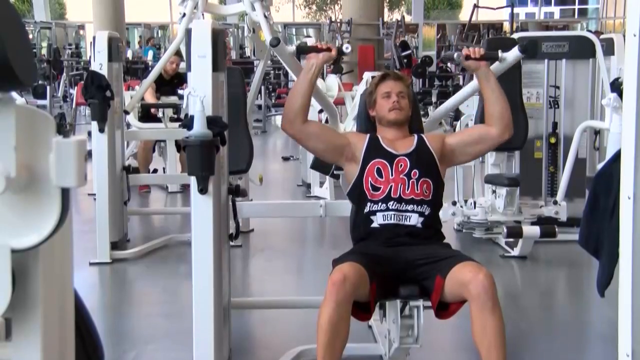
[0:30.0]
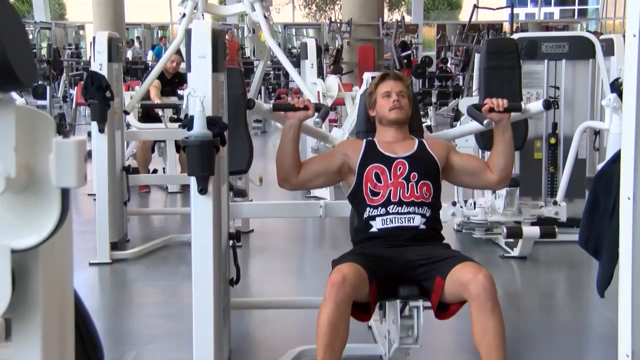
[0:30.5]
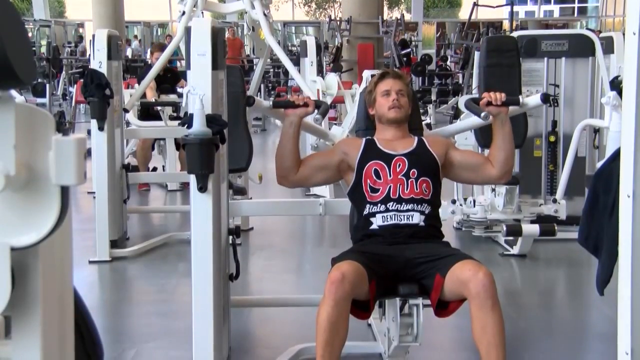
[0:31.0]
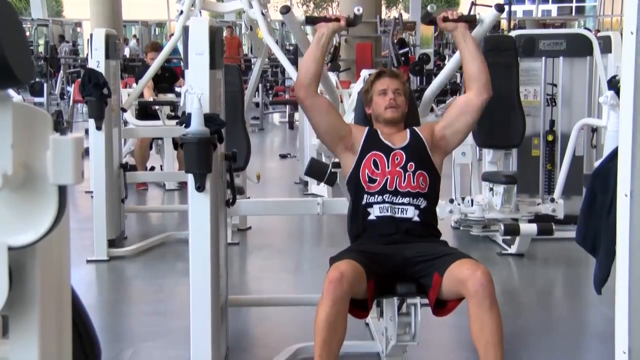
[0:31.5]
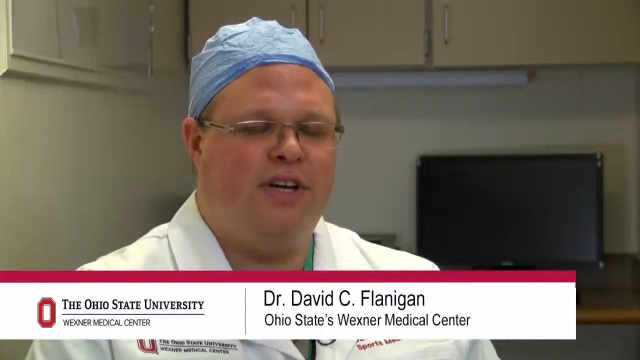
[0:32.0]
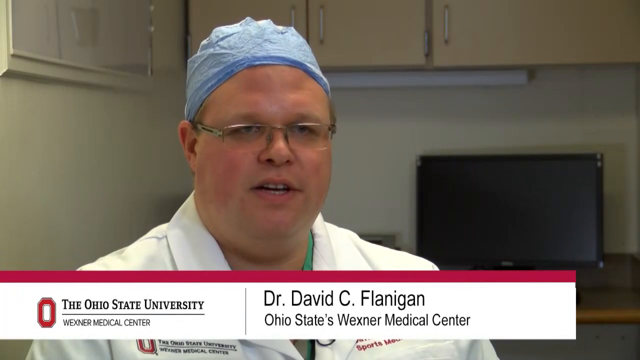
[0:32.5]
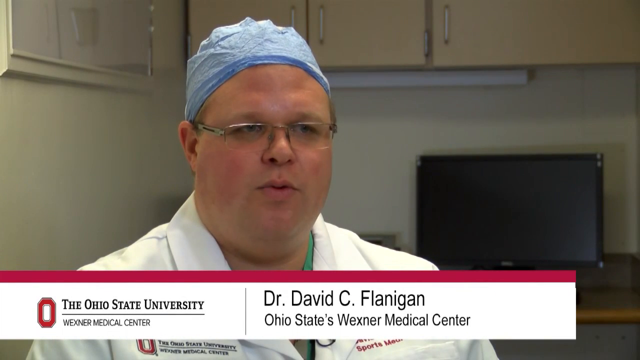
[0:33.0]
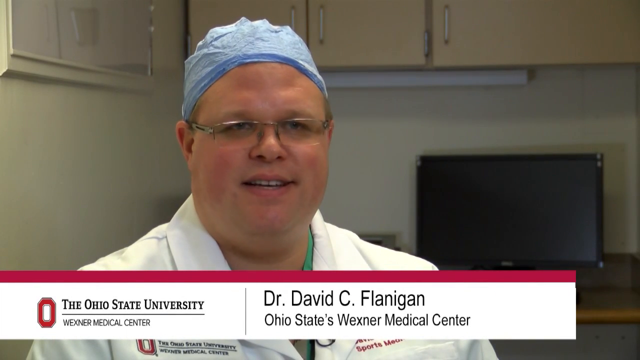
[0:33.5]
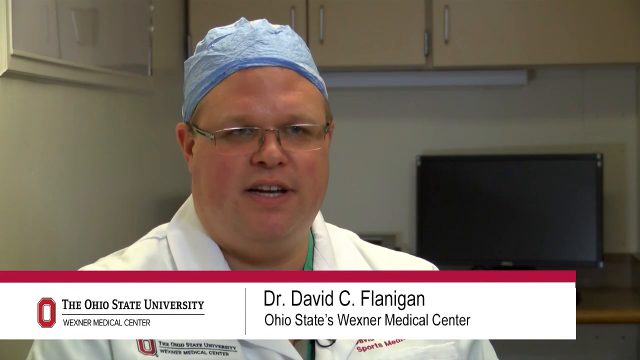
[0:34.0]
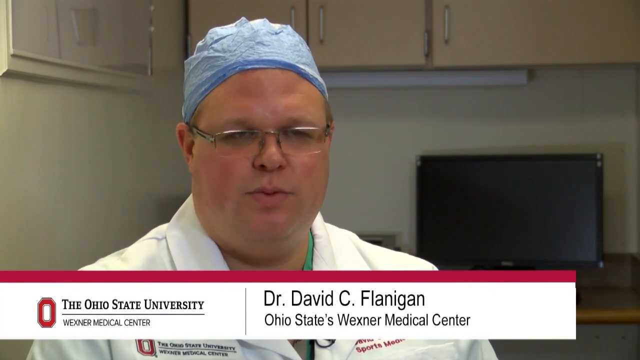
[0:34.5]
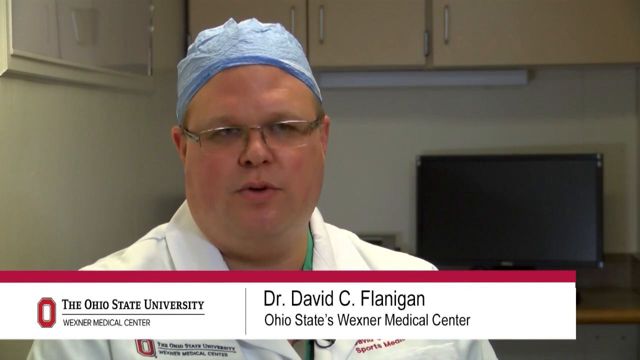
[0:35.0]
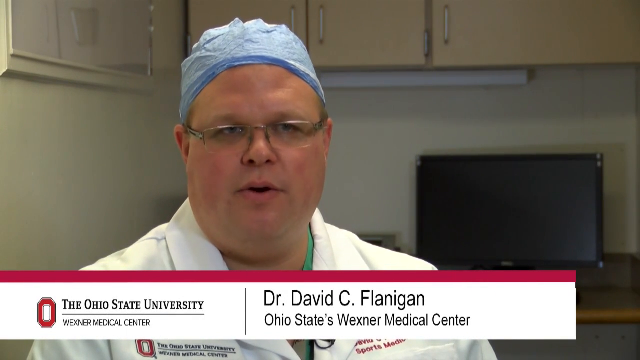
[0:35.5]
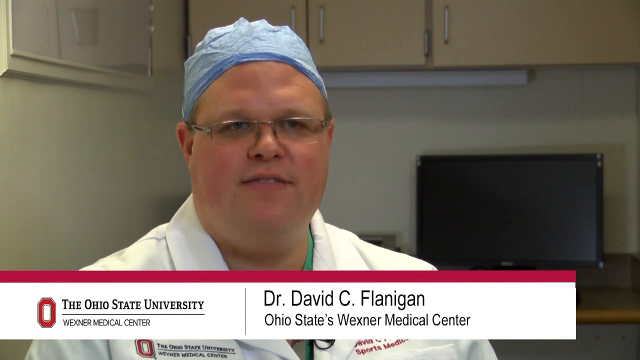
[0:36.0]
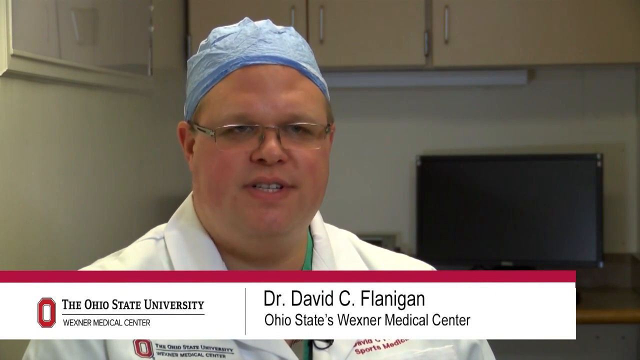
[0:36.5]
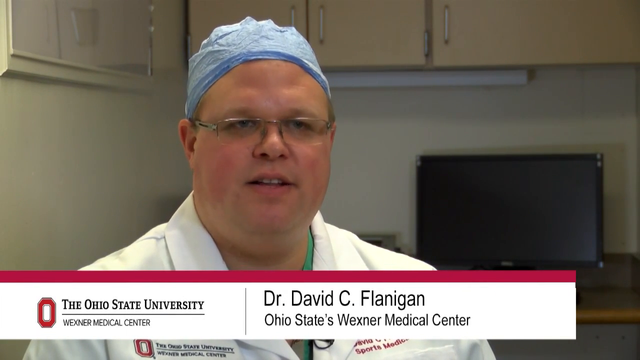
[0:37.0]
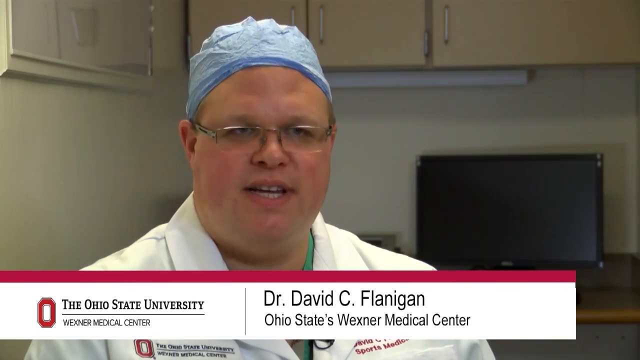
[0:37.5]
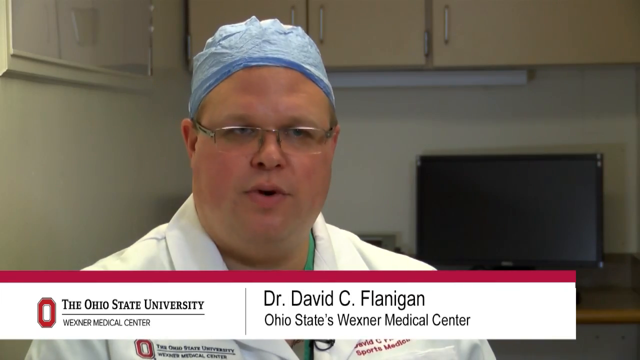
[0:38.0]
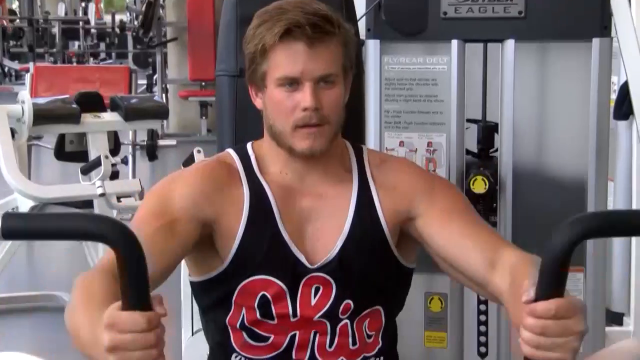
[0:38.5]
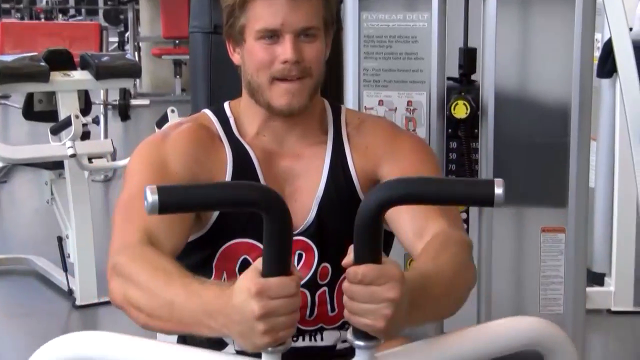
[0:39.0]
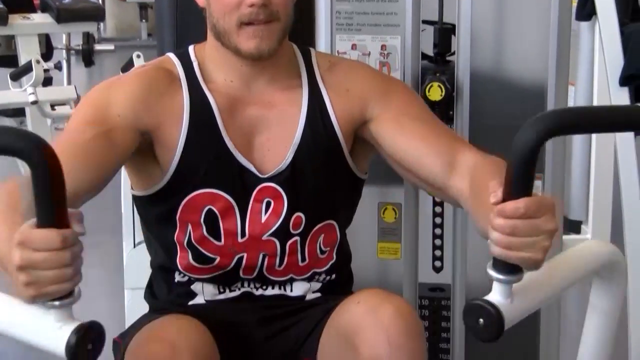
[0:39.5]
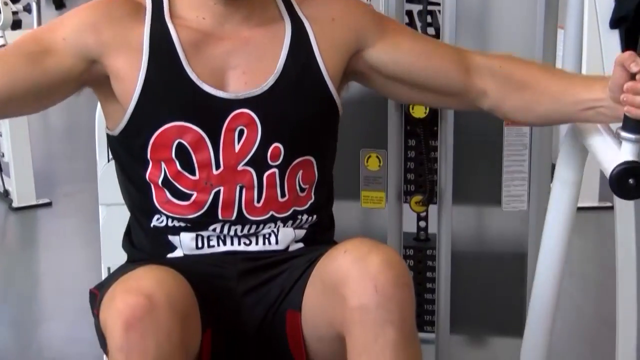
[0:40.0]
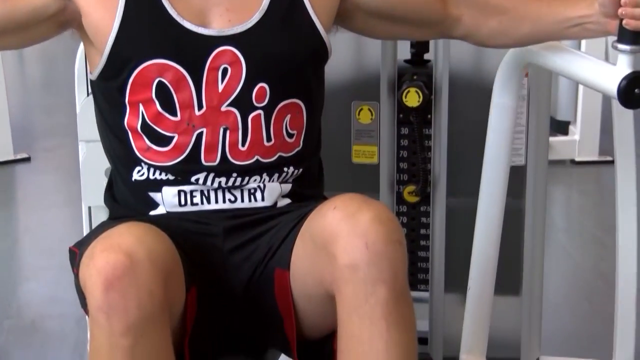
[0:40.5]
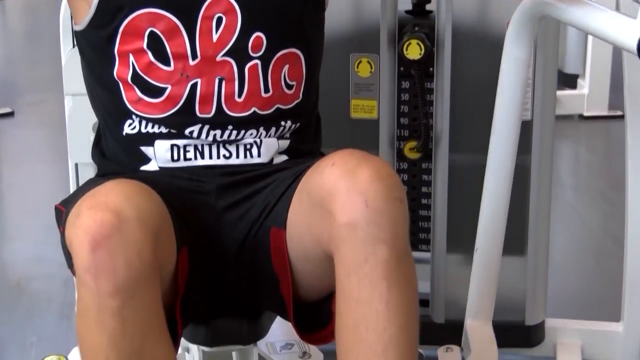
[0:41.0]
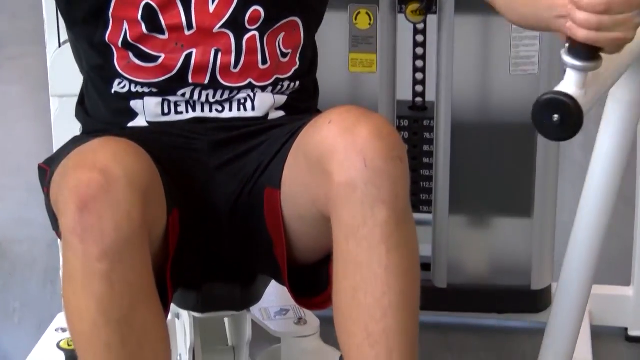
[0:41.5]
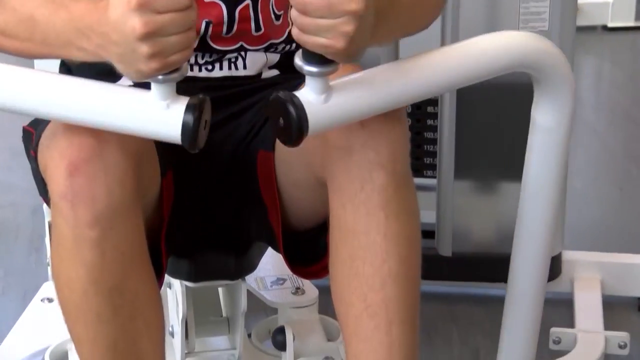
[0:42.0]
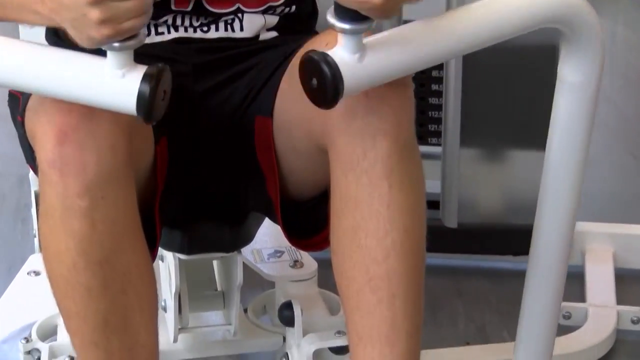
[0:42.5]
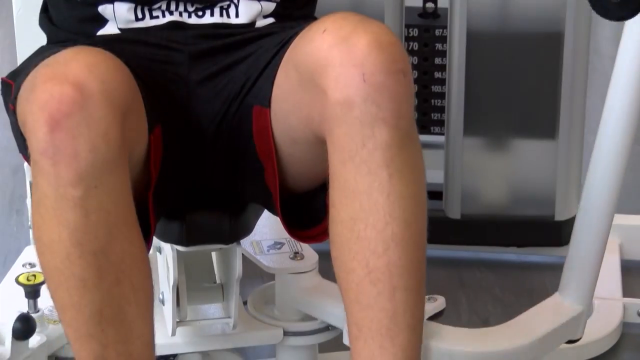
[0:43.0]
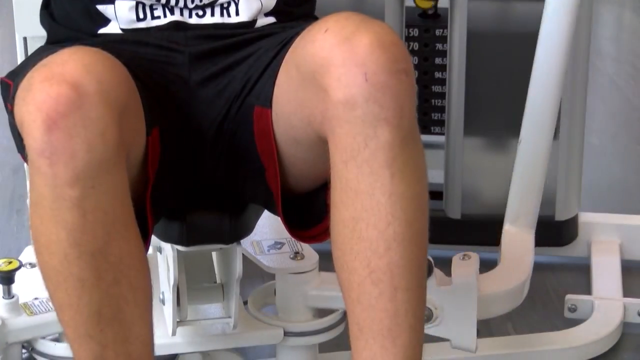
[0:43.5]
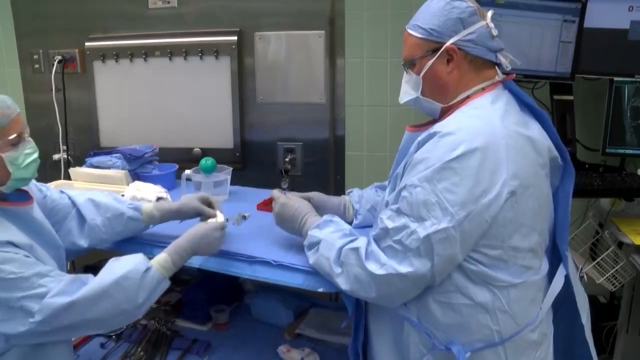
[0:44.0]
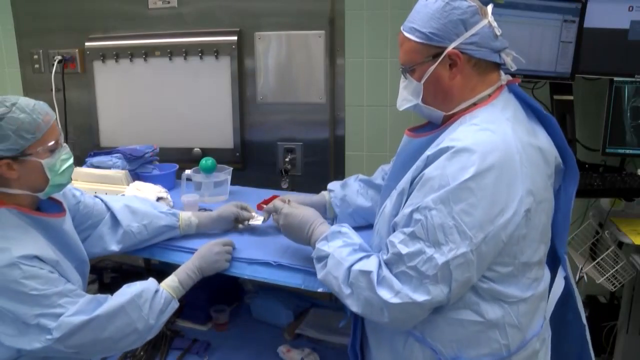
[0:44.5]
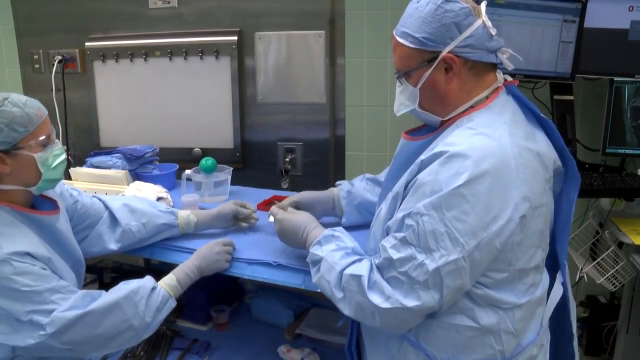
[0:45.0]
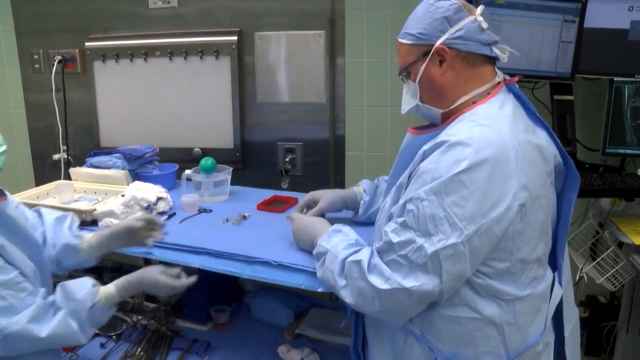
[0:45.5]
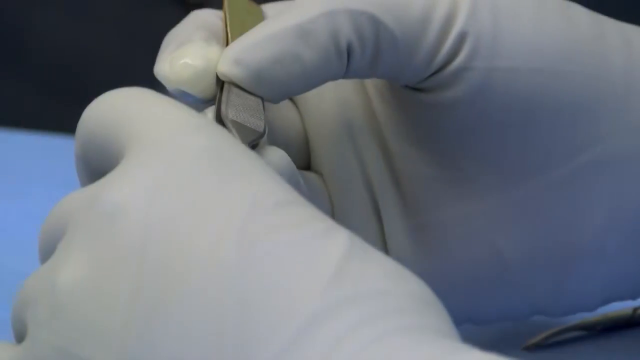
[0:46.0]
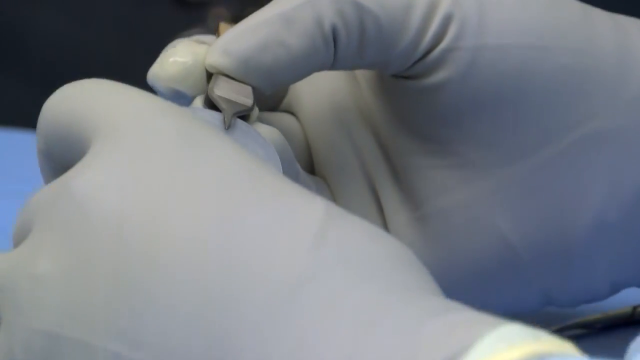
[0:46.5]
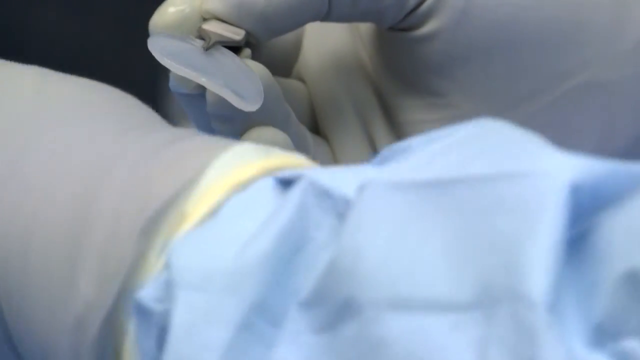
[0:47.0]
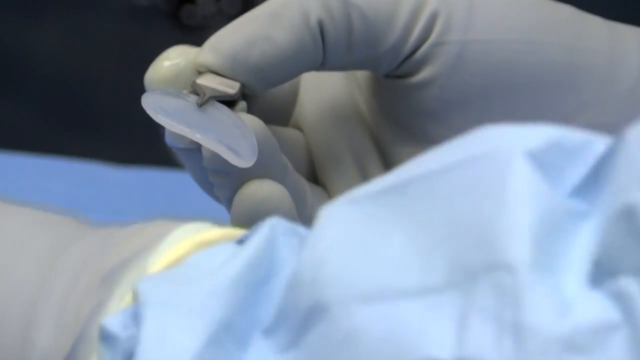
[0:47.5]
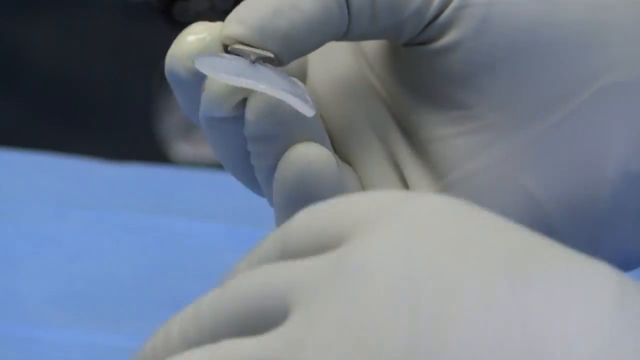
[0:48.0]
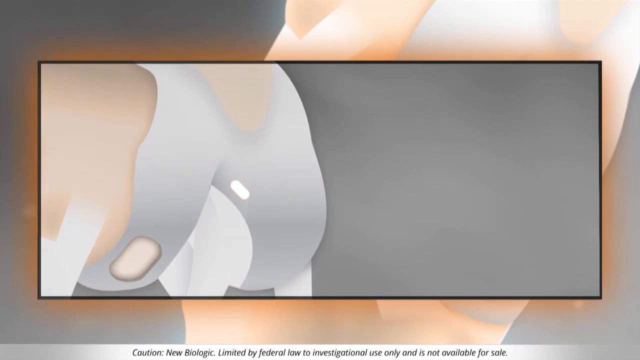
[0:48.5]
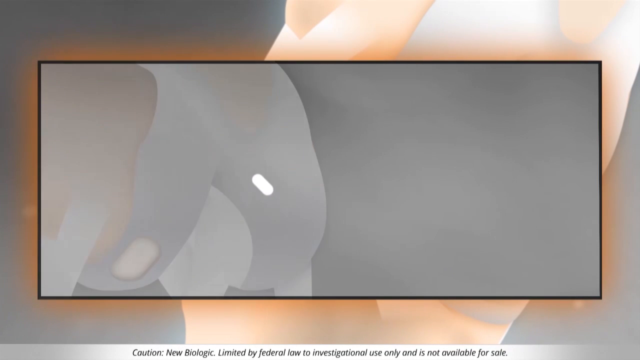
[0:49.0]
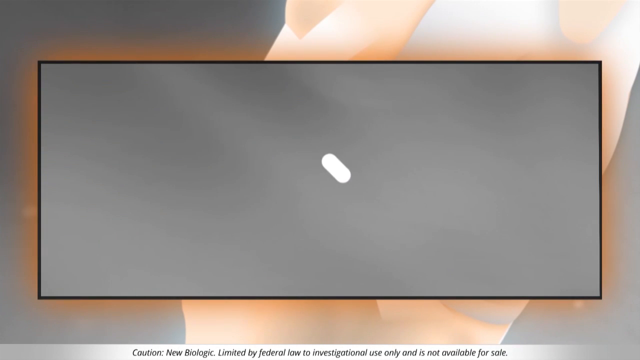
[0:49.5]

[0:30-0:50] The camera changes to a further-away vantage showing the man from the front as he pushes his arms fully above his head and then moves them down until his hands are in line with his shoulders. The screen then changes to an interview-style shot of a doctor wearing a white lab coat, glasses and a blue hat, speaking to a person off to the side of the camera. A white bar with a red stripe at the top appears at the bottom, with the Ohio State University logo on the left and, on the right, the doctor's name along with "Ohio State Wexner Medical Center" in smaller black text. The doctor is less expressive than the man; he nods slightly, turns his head and scrunches his nose as he speaks, and continues to nod. The image then changes back to the man on the gym equipment, doing an exercise similar to the first one, repeatedly moving his arms in together and then out. The camera then changes to show a laboratory or surgical session.